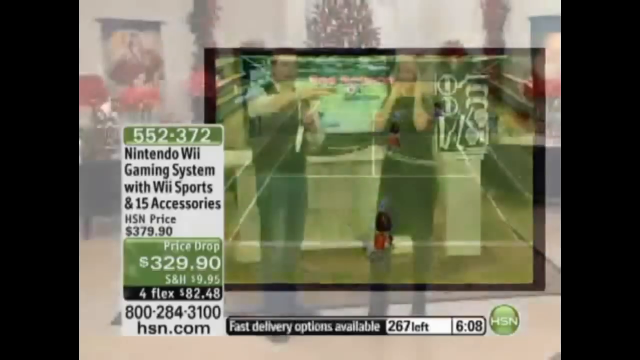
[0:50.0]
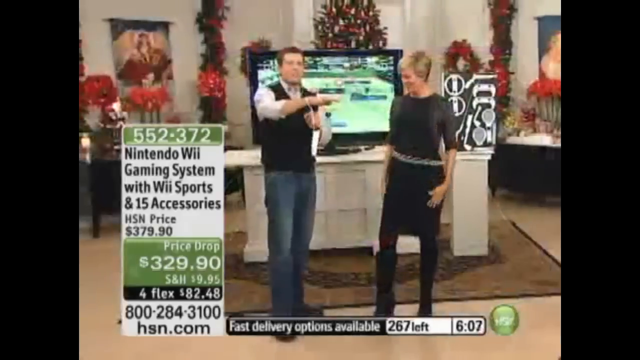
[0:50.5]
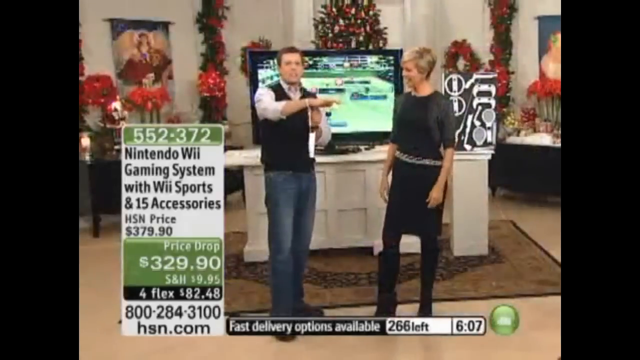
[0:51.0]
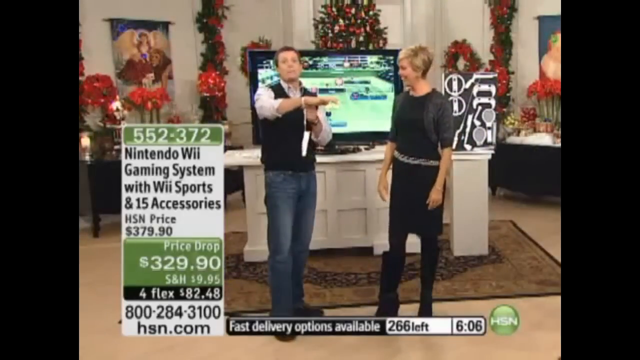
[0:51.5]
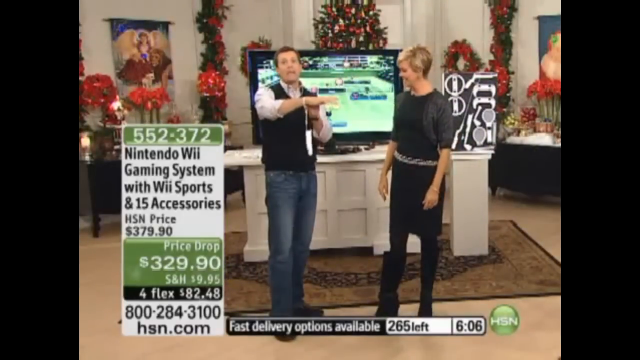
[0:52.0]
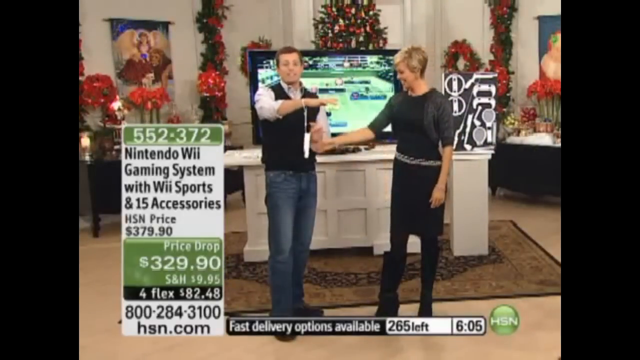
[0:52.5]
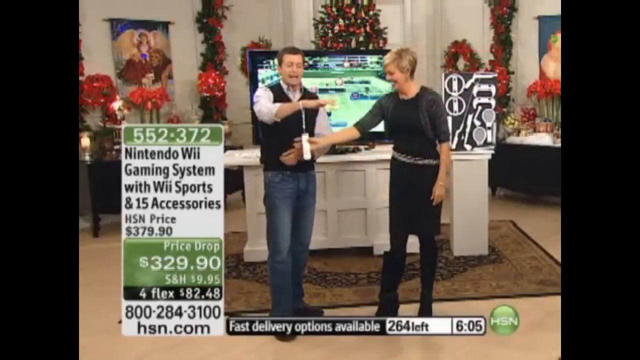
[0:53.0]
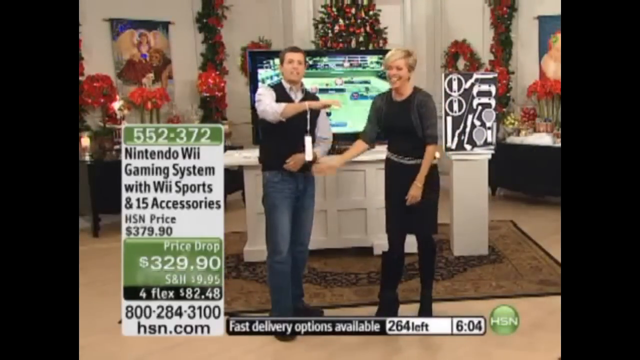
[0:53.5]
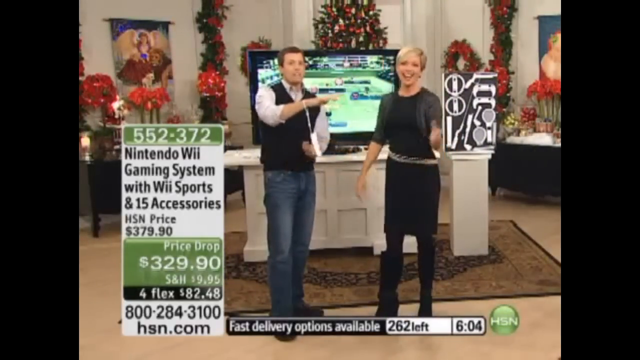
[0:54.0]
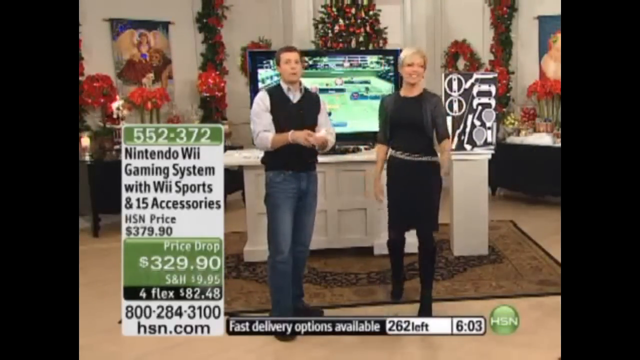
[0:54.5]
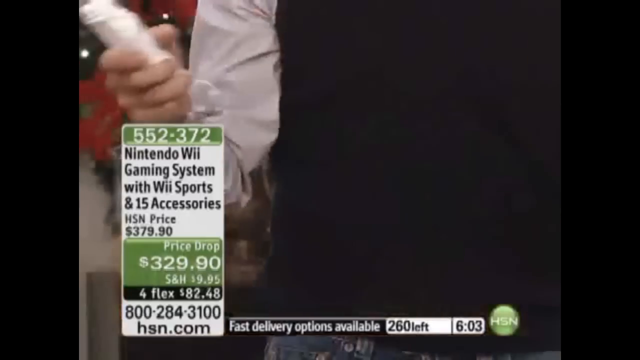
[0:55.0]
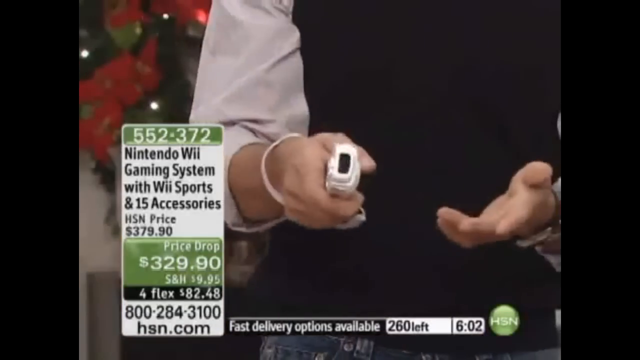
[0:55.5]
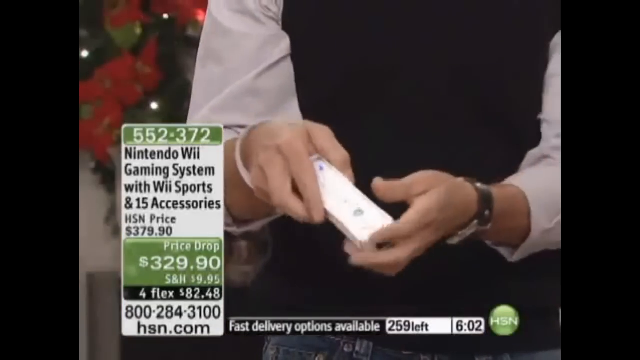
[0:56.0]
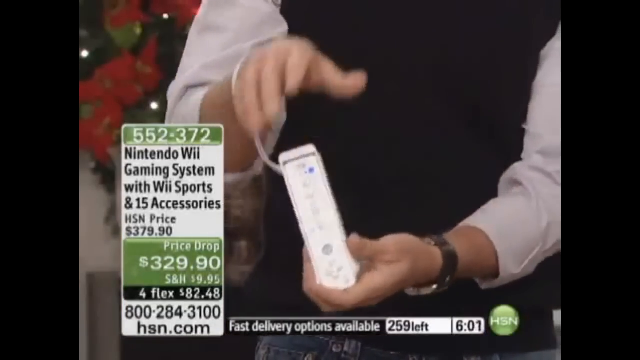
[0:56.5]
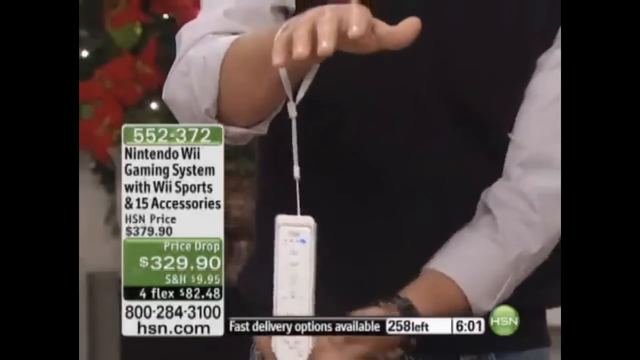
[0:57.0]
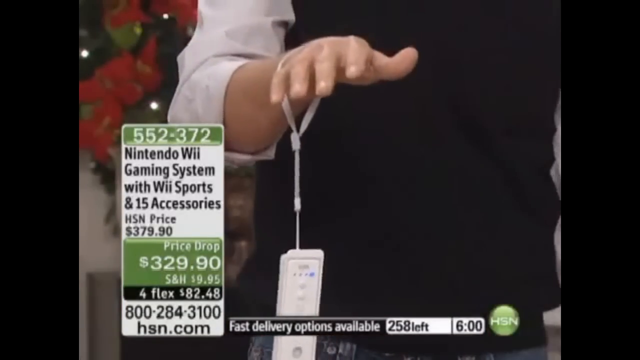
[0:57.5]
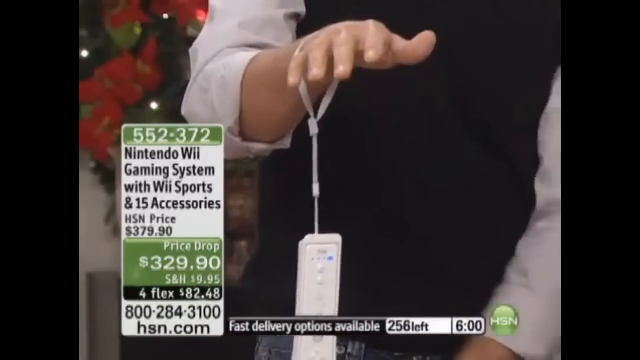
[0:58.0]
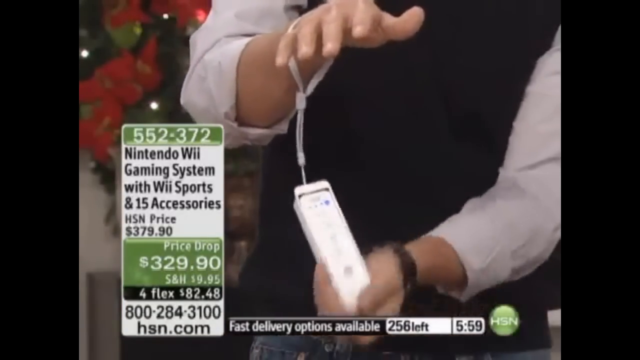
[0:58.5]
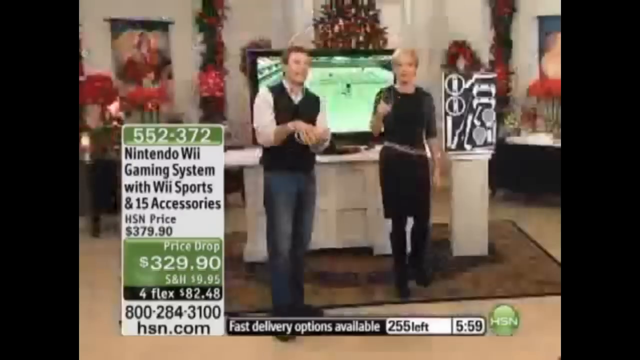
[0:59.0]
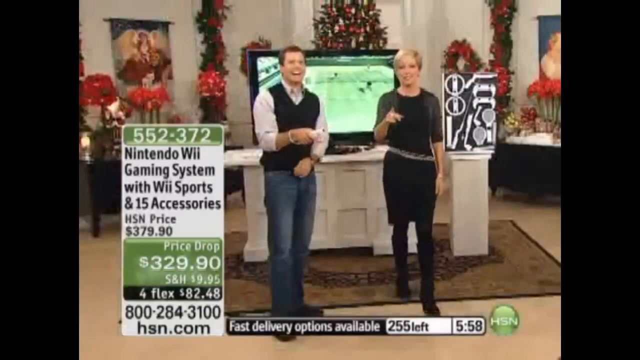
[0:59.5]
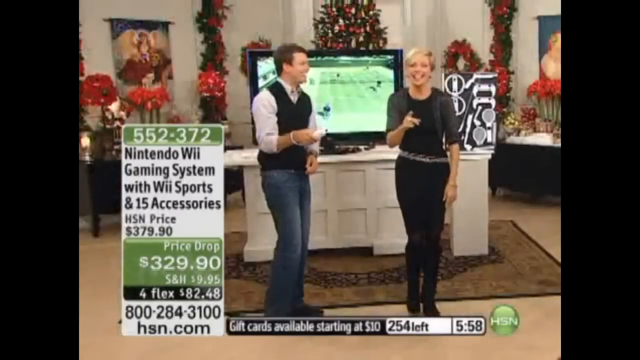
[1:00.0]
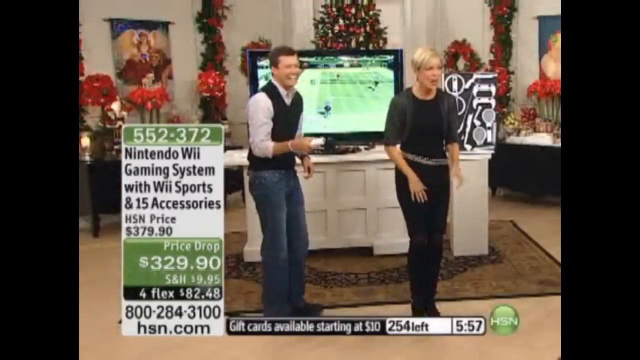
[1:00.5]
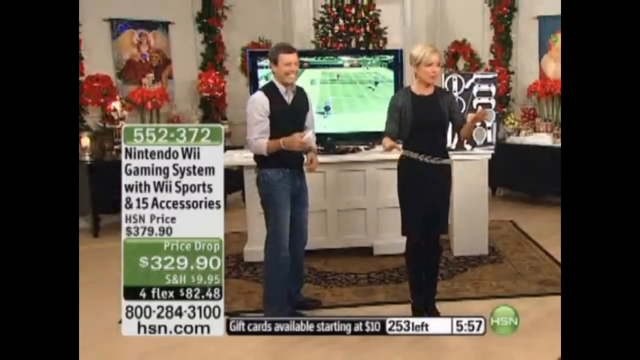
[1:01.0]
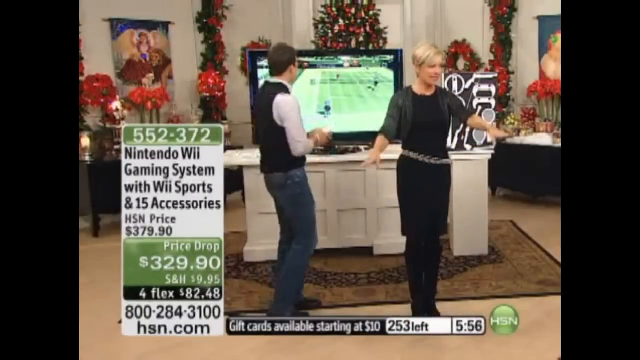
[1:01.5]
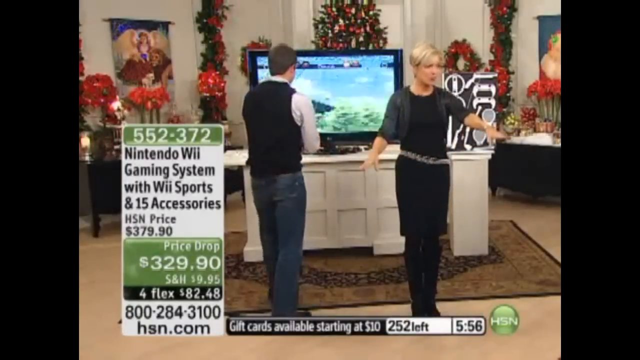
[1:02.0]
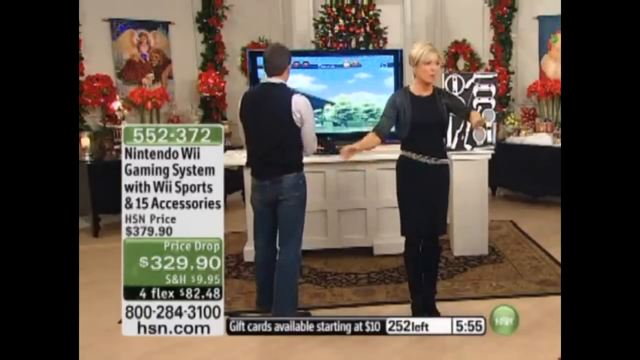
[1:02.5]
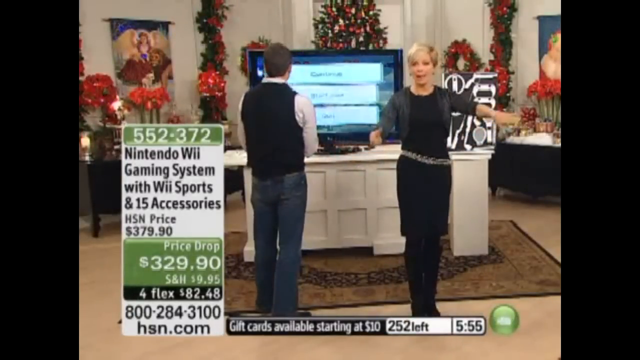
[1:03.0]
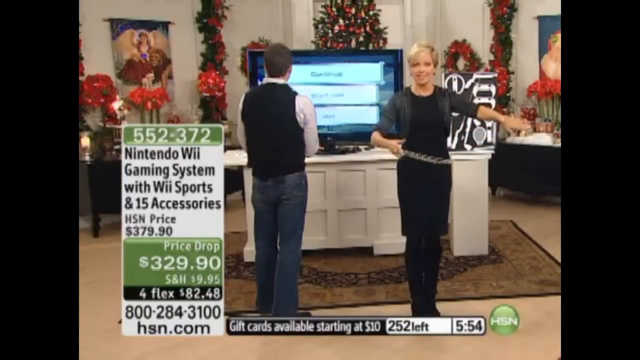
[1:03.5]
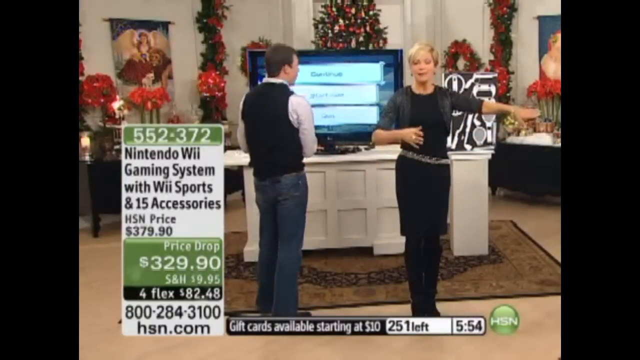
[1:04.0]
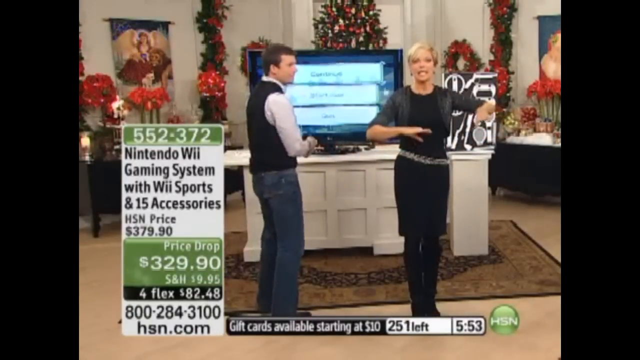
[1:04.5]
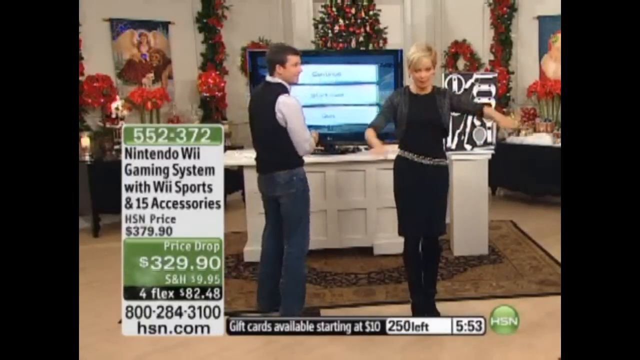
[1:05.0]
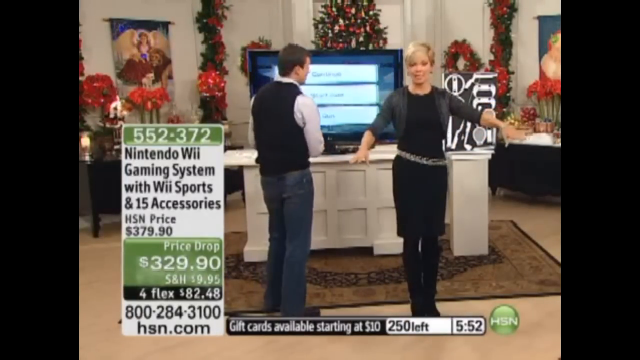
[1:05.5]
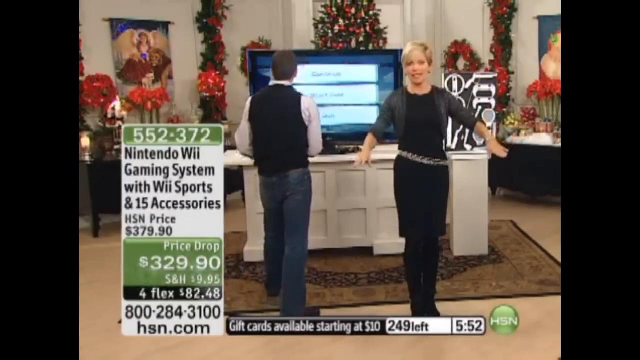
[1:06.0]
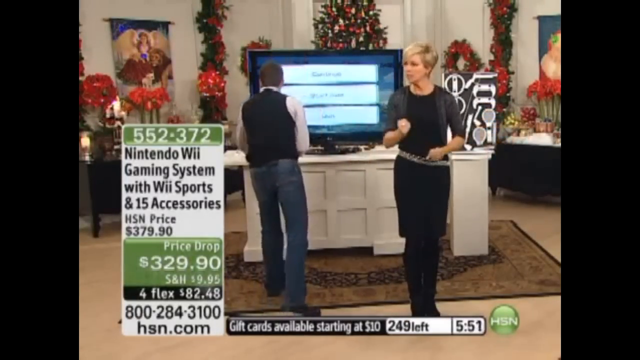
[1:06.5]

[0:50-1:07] On the Home Shopping Network set, a male and a female presenter are shown with a white table behind them holding a large screen TV, which displays a Wii Sports interface with a simulated tennis game. Next to them, a vertical white box shows the product description and price: the Nintendo Wii Gaming System with Wii Sports and 15 accessories, originally sold for $379.90, with the box saying there is a price drop to $329.90. The presenters laugh and look at the camera. The male presenter has a Wii Control strapped to his right wrist and holds it up while the female presenter taps at it and laughs. The camera then zooms in for a close-up of the controller in his hands as he displays it to the camera. The female presenter keeps laughing, and the male presenter turns back to the television to use the controller.